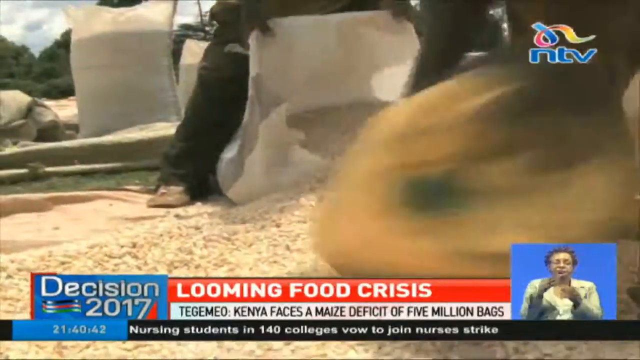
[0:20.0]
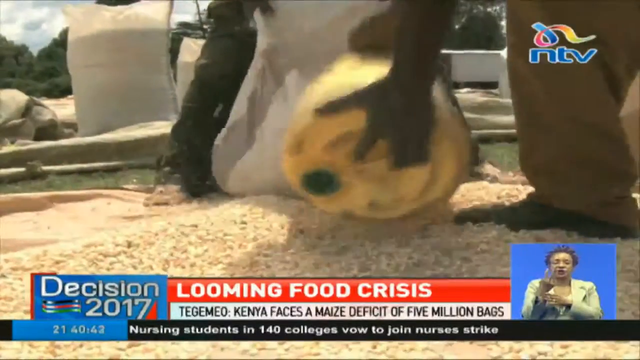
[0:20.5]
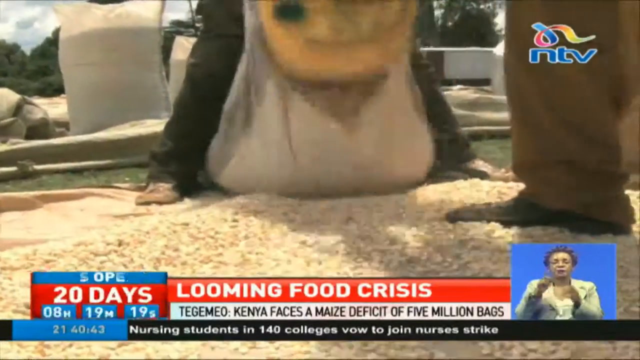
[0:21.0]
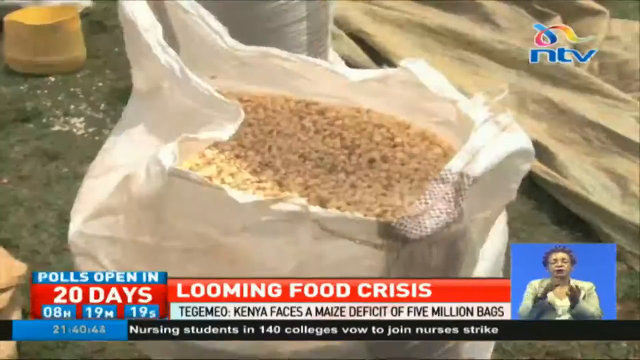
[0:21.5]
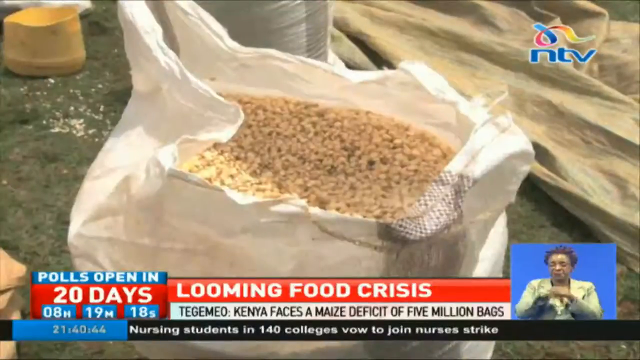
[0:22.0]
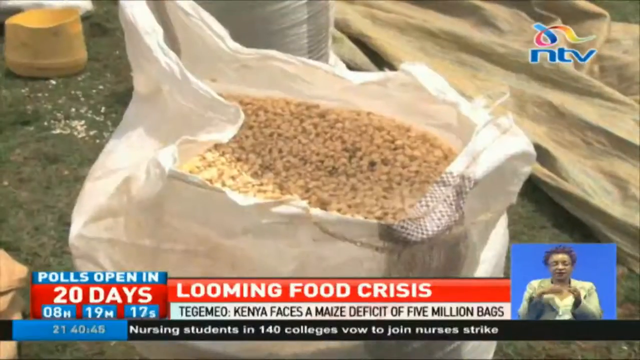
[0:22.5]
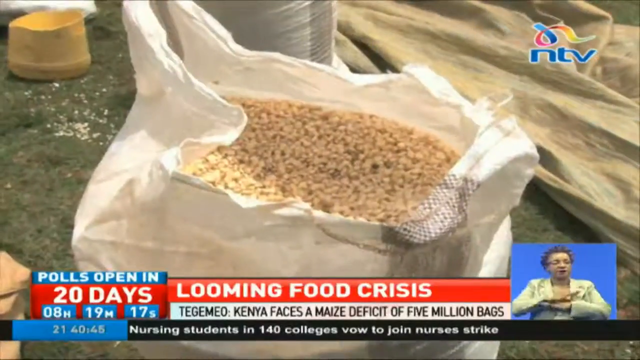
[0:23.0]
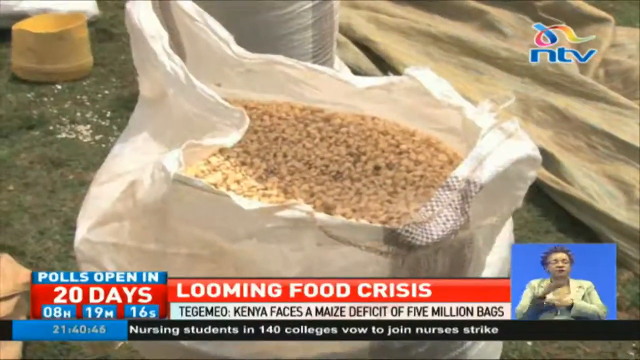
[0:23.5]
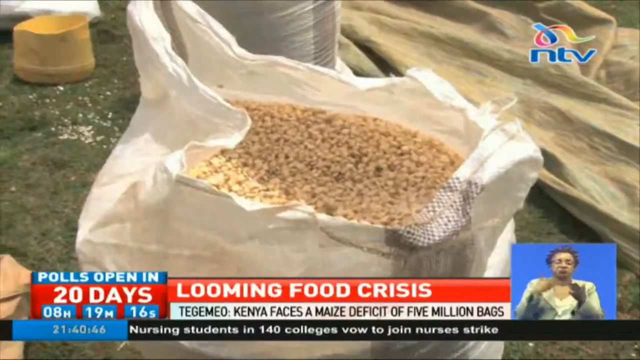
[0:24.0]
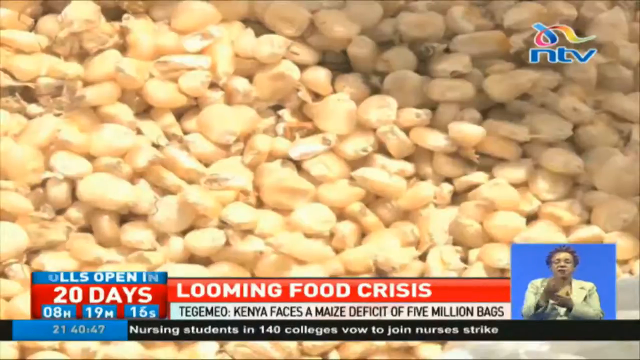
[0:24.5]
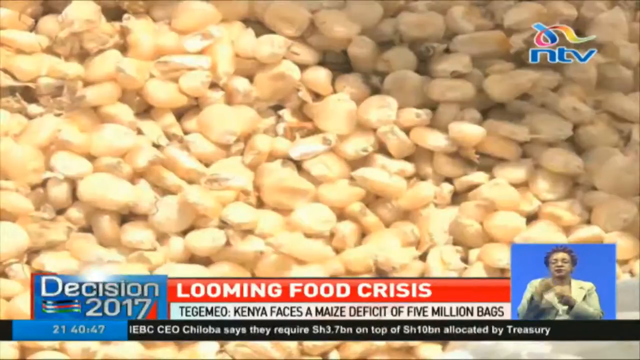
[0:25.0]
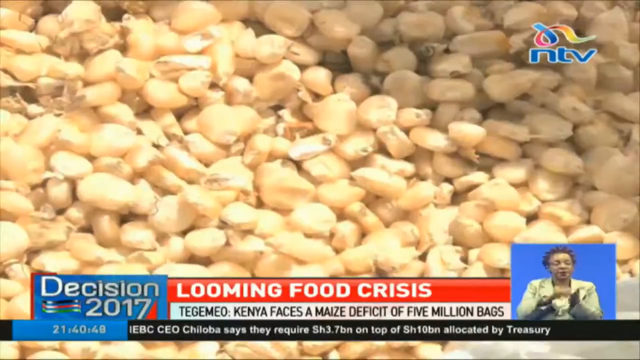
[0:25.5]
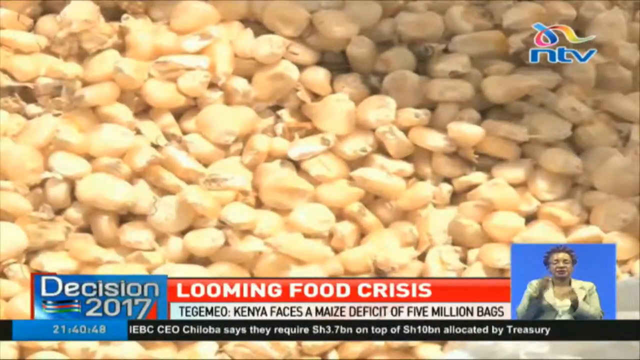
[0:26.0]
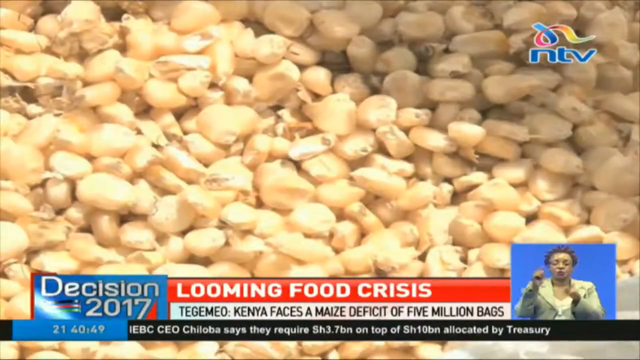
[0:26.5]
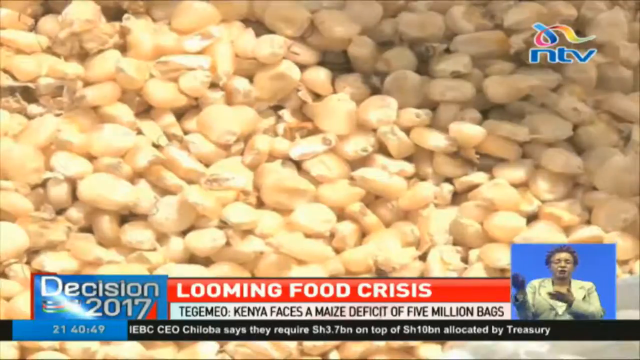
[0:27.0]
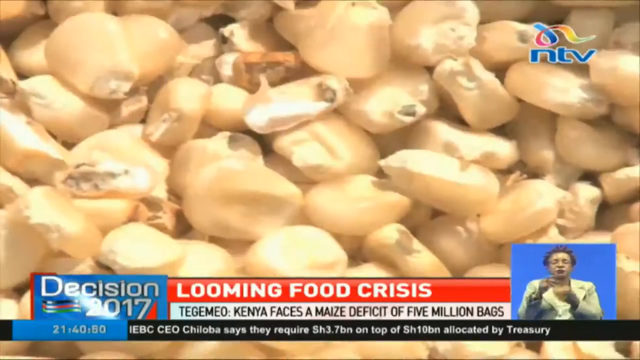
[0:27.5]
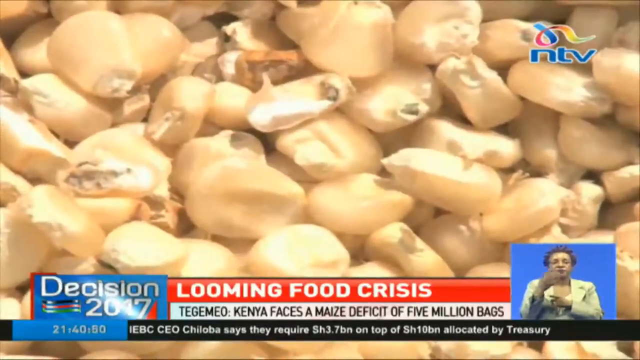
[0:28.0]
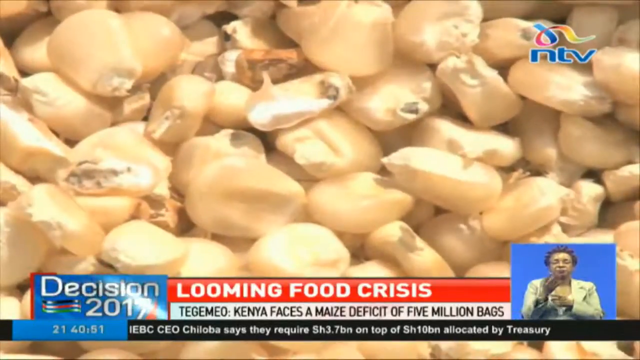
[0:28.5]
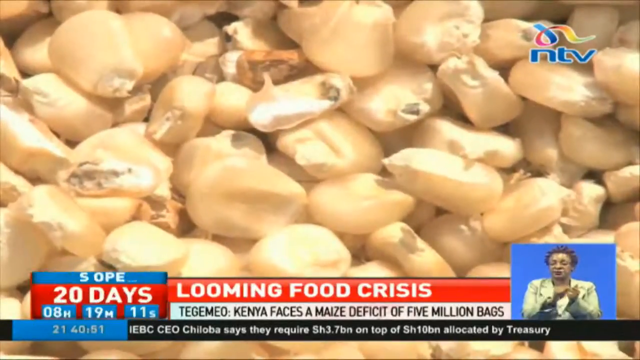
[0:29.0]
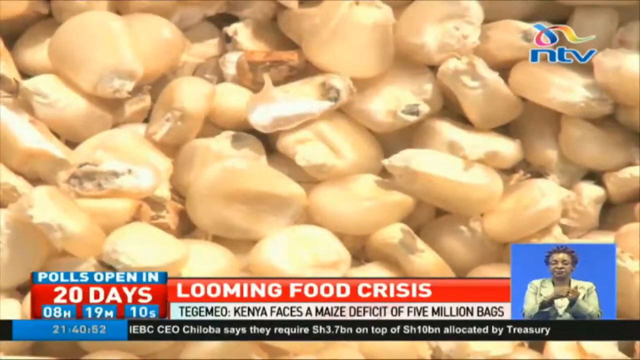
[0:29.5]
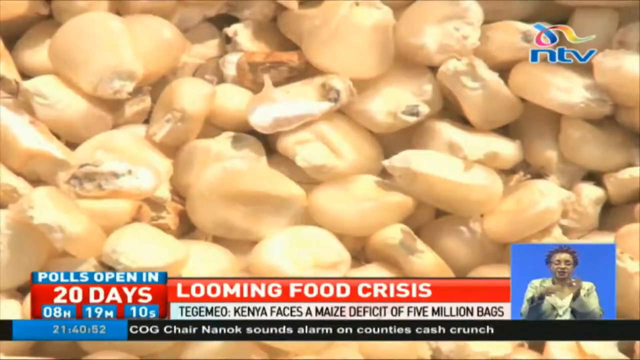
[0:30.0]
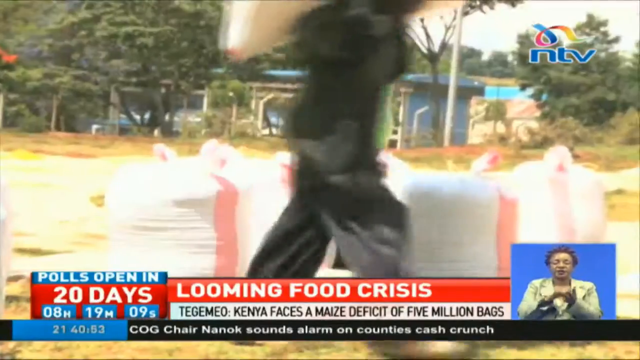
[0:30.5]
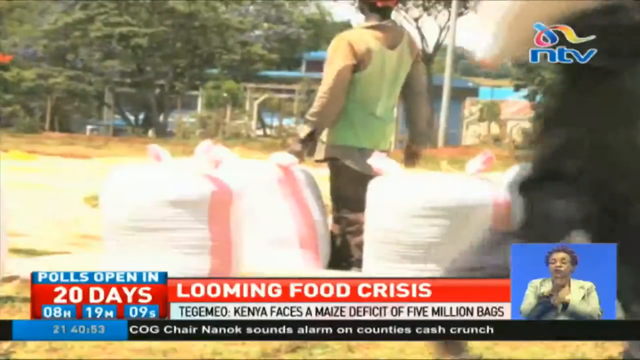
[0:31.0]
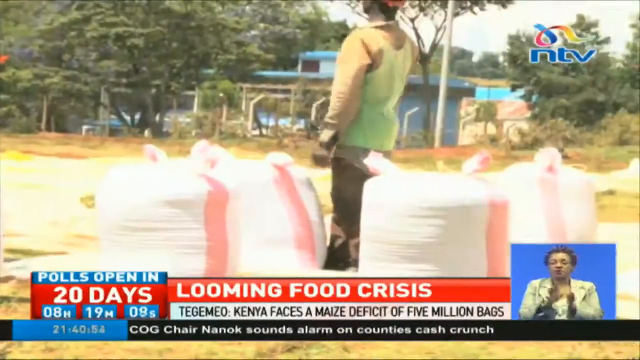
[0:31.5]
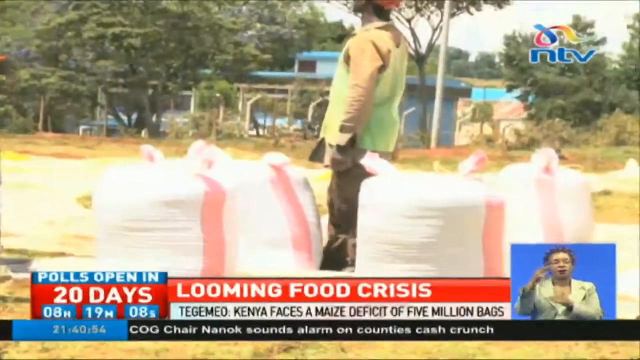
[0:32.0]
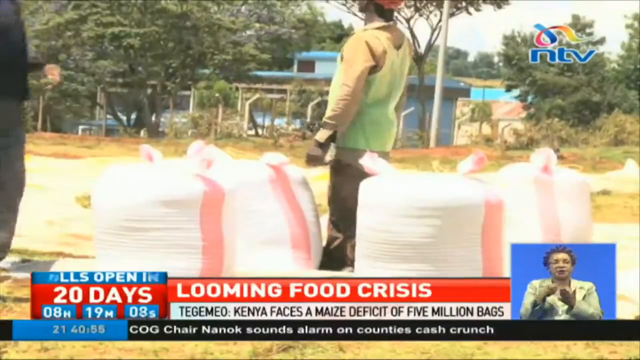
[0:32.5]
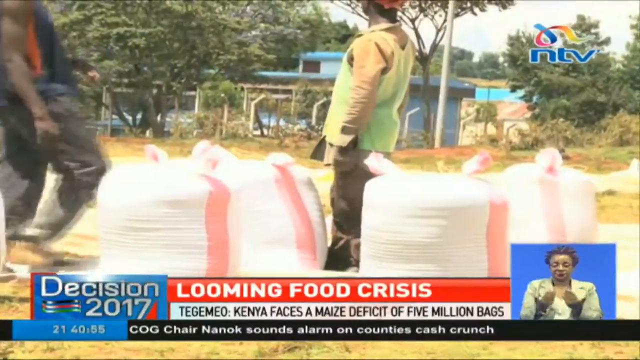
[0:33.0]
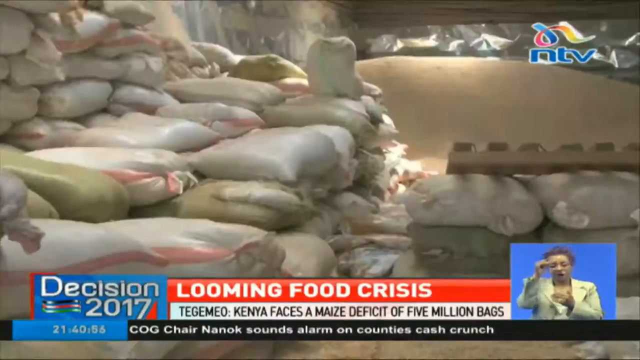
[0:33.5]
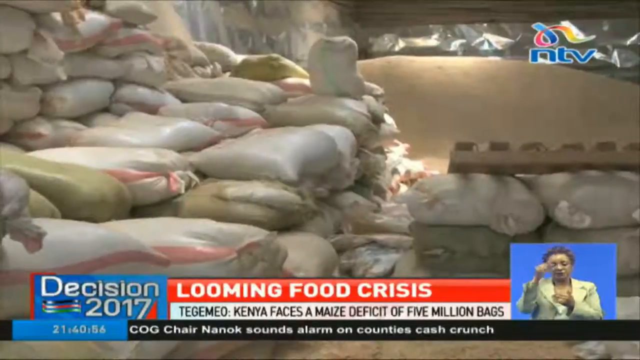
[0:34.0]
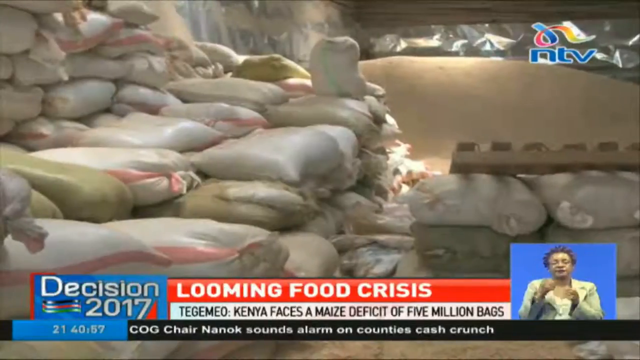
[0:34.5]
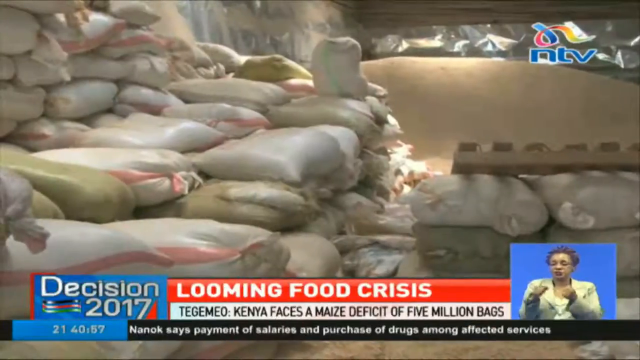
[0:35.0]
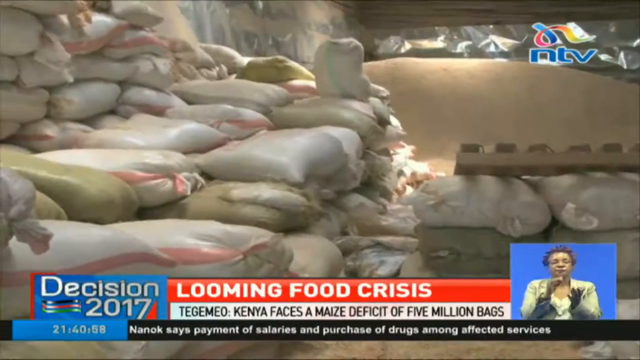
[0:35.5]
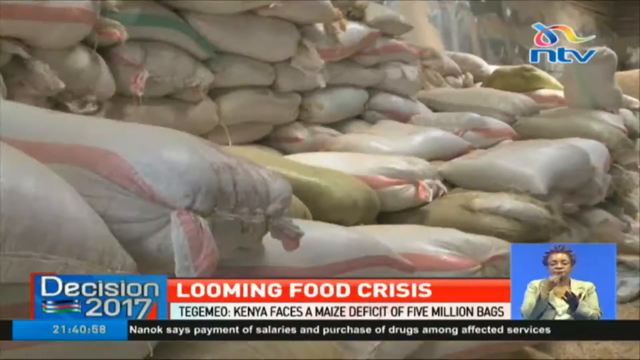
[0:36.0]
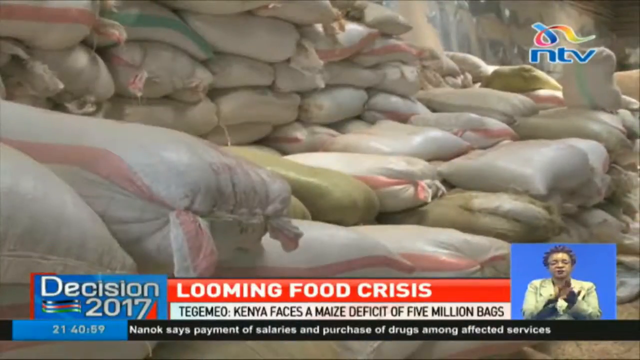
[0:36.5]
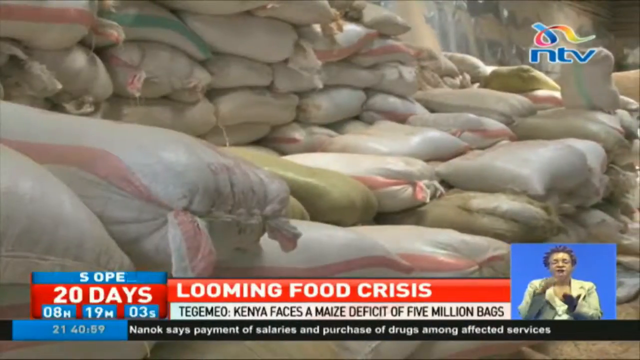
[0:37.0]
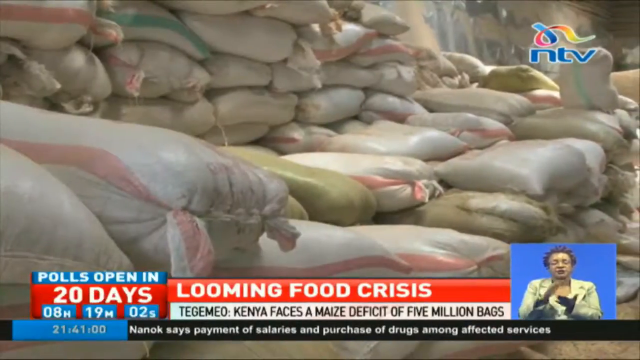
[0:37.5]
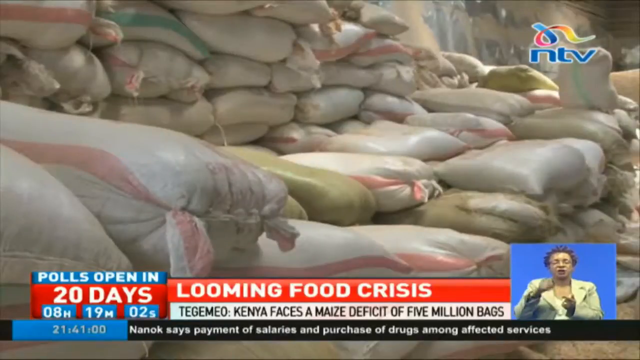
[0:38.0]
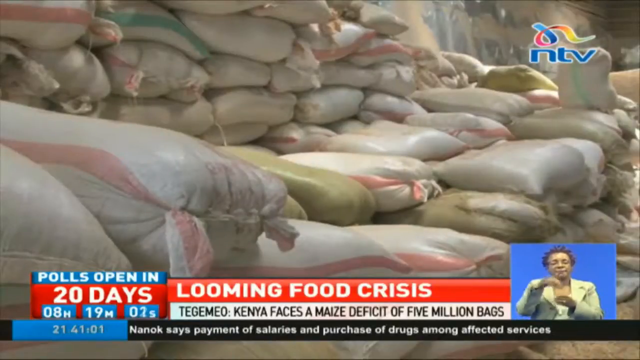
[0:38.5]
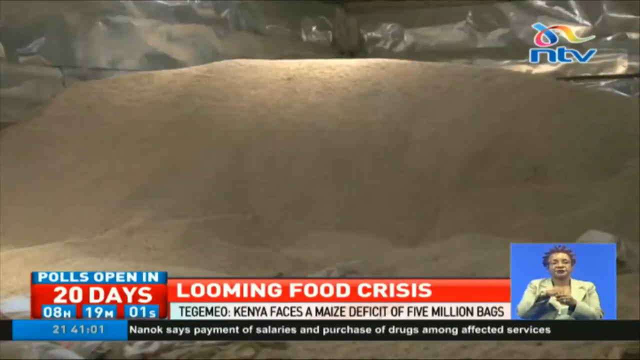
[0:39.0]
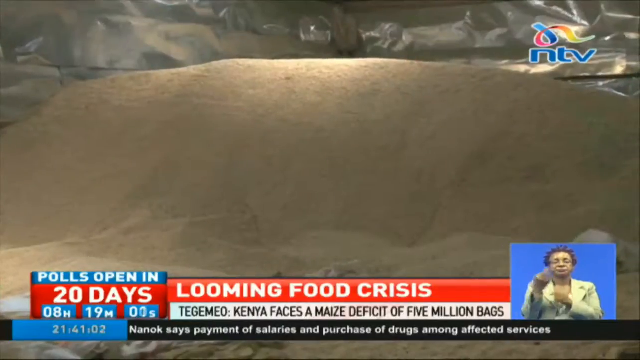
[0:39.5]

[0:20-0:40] "Decision 2017" appears in the lower left-hand corner, and next to it, in white all-capital letters, "Looming food crisis." The text states that a place in Kenya faces a deficit of MAIZE of 5 million bags, and "Polls open in 20 days" is shown. The camera zooms in on the kernels. Someone in the lower right-hand corner is doing sign language. Workers are shown along with stacks of bags of their food product and piles of it.